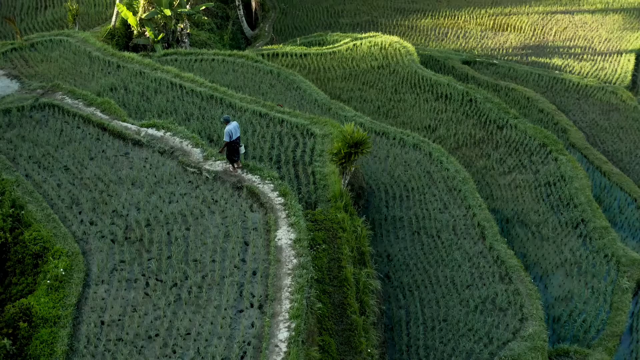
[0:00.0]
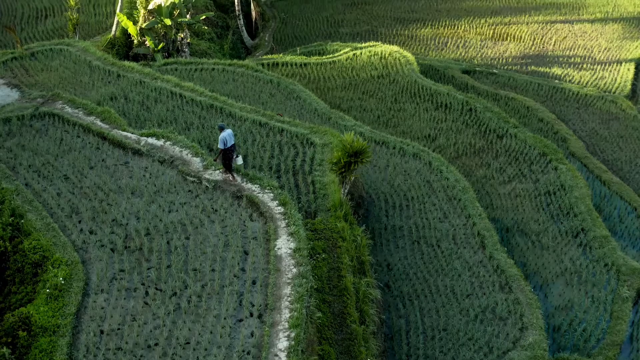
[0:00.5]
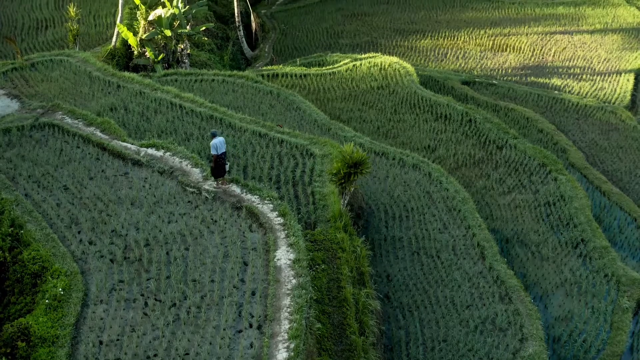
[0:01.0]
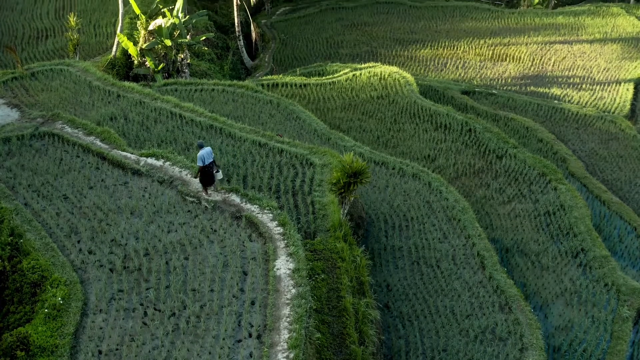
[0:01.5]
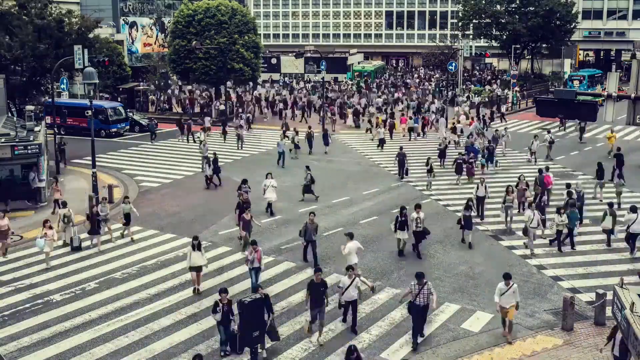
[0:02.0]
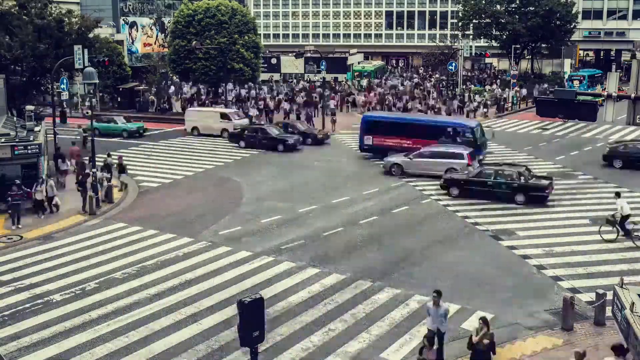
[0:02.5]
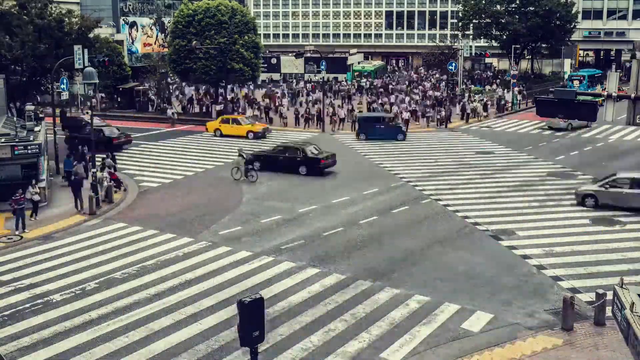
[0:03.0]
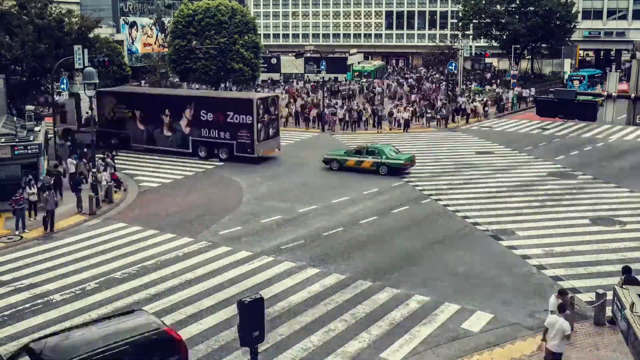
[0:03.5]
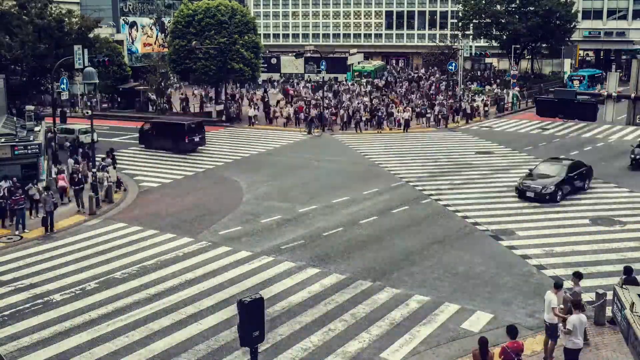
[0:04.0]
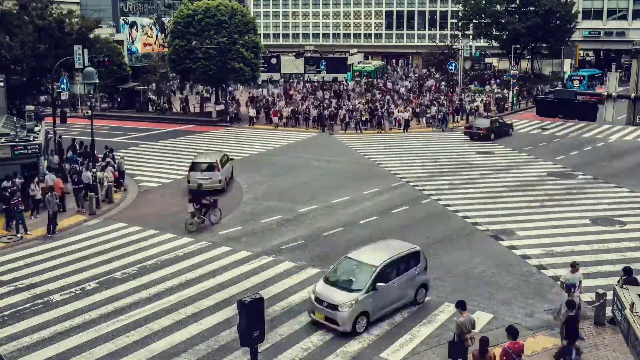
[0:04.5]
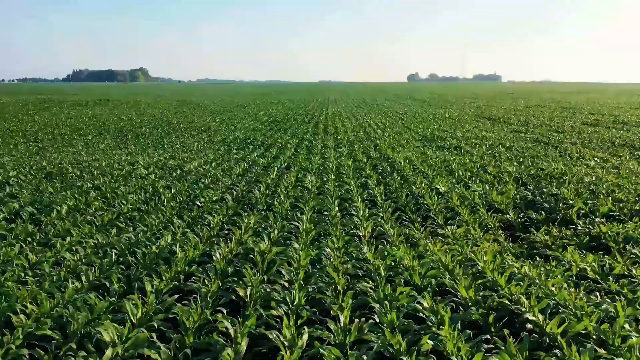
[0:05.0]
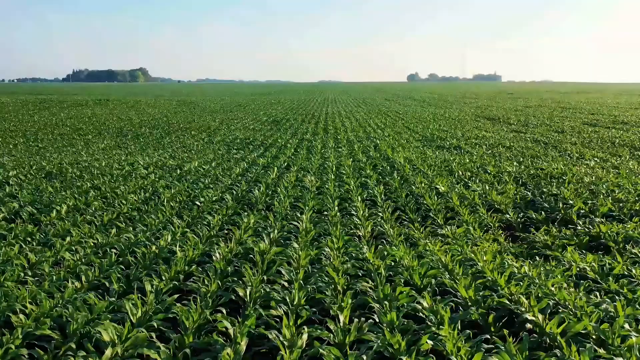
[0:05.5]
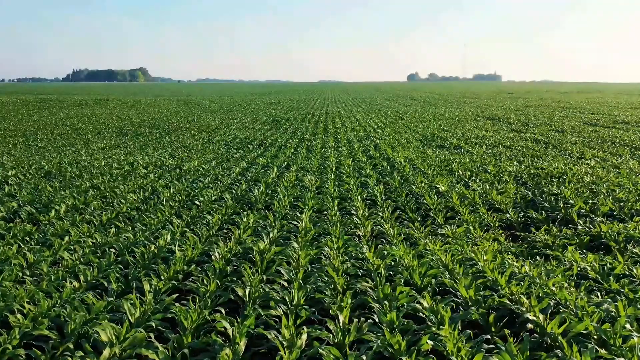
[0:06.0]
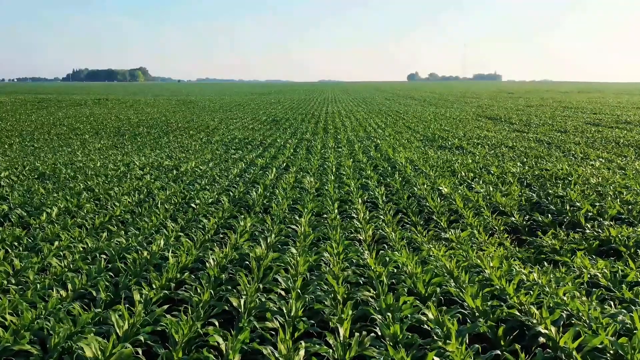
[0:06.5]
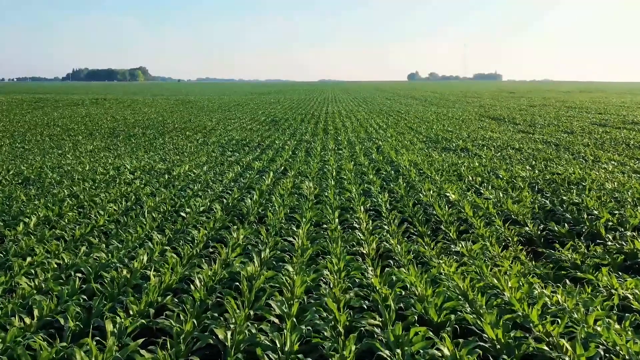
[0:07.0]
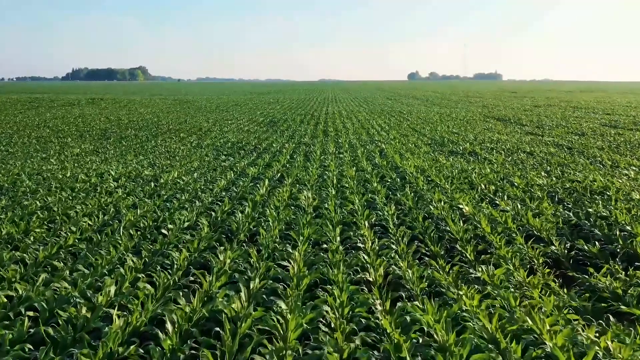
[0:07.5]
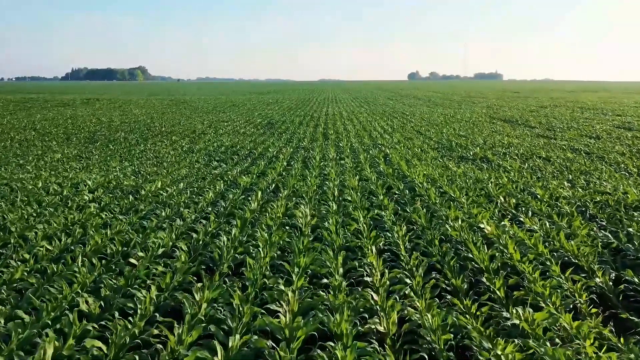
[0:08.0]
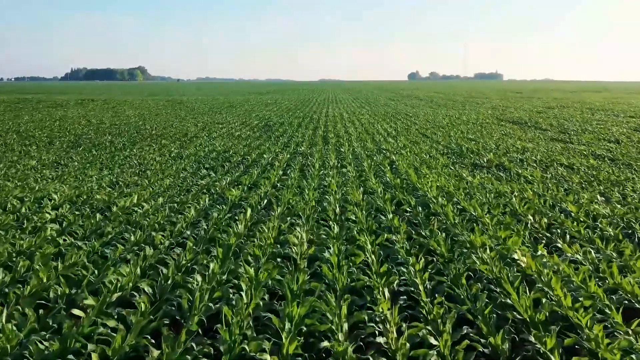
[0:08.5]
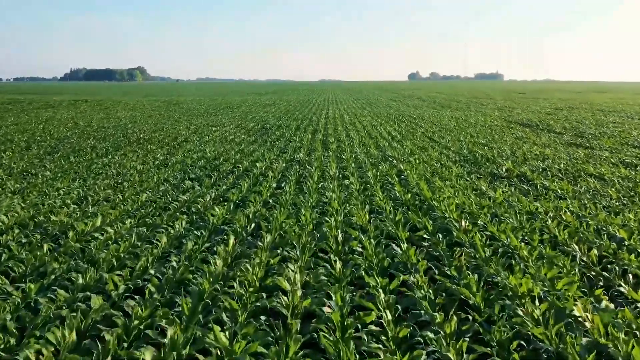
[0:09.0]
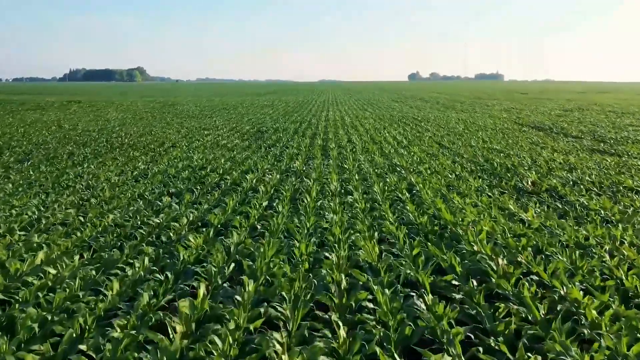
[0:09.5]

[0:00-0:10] A person walks through a field that looks to be a farm area with terraced levels and rows of green vegetation. The video cuts to a busy street with many crosswalks, where a large group of people stands on the sidewalk at the top of the frame and many cars zoom quickly through the street; the footage of this busy crosswalk and street is sped up. Another cut shows a large, long farm with a great many rows of what look to be corn stalks lined up in a field, and the camera zooms forward above them in the sky.